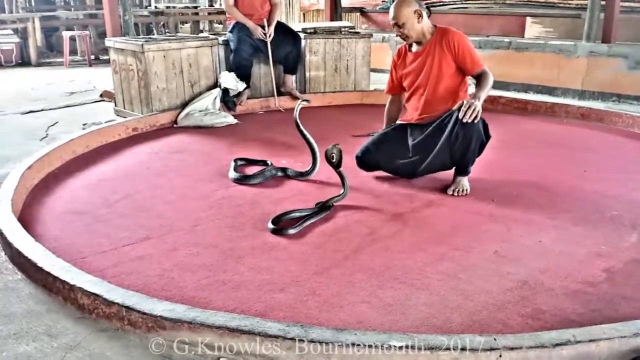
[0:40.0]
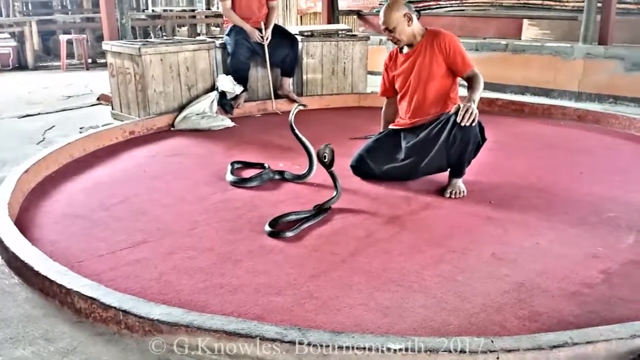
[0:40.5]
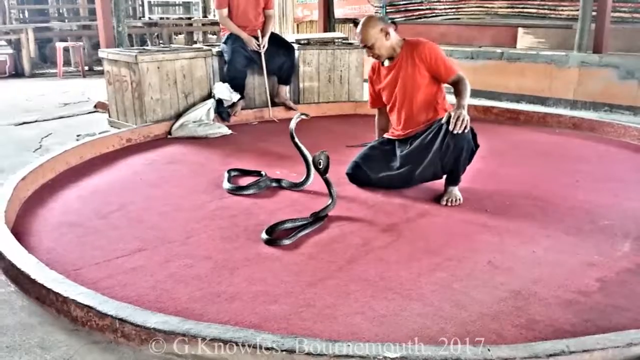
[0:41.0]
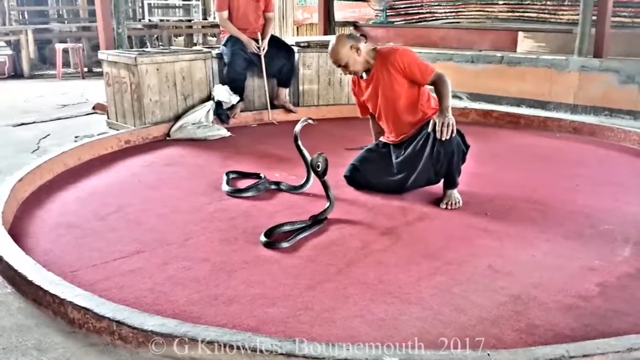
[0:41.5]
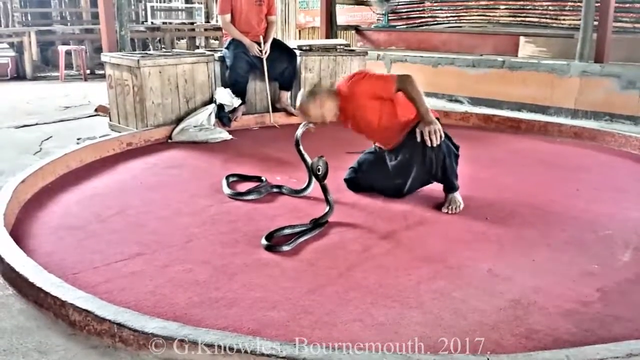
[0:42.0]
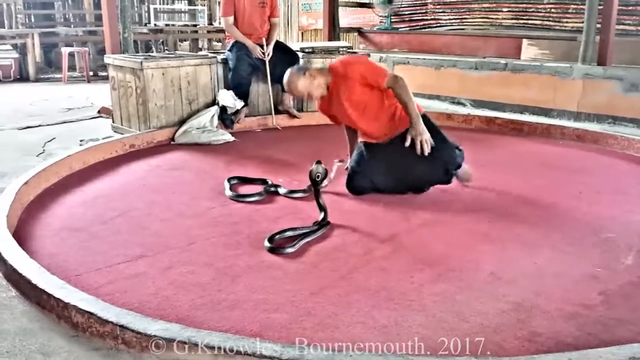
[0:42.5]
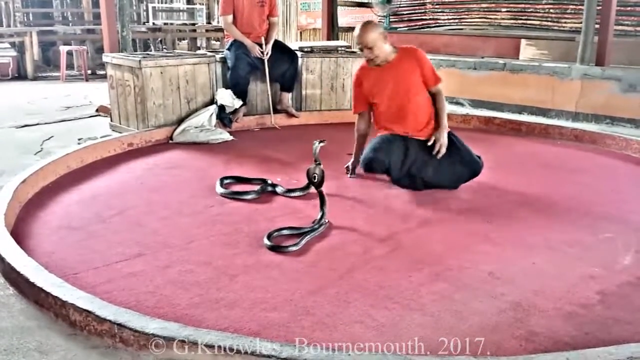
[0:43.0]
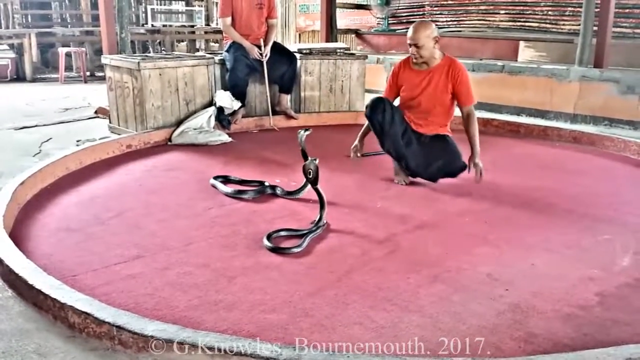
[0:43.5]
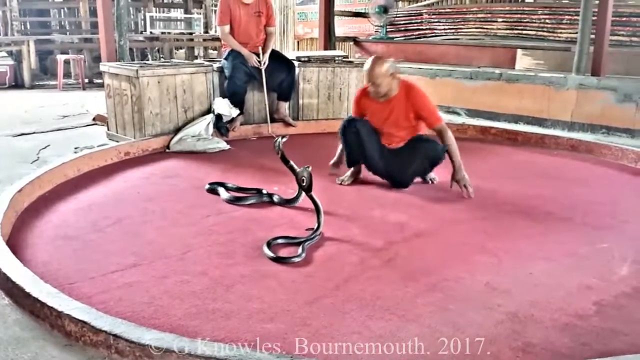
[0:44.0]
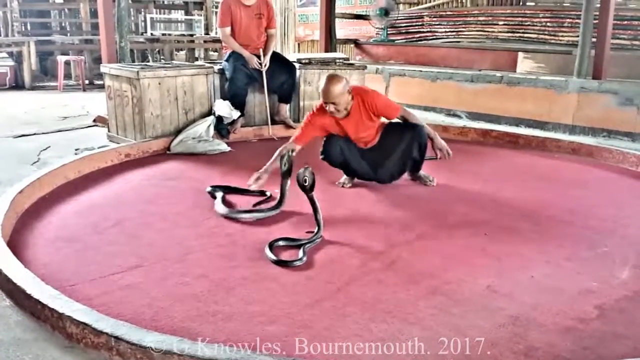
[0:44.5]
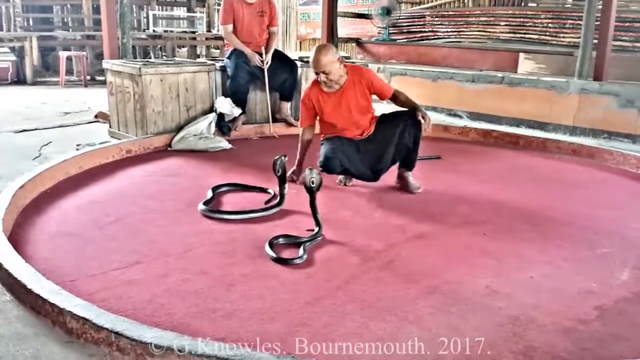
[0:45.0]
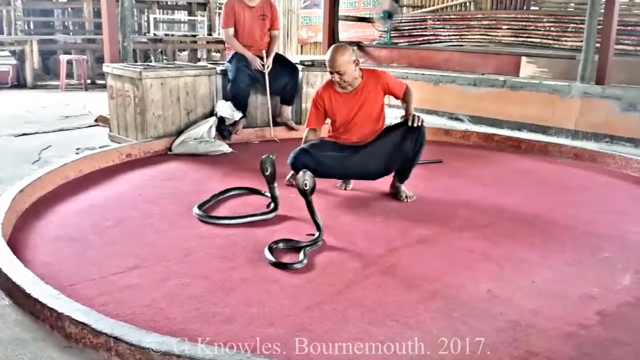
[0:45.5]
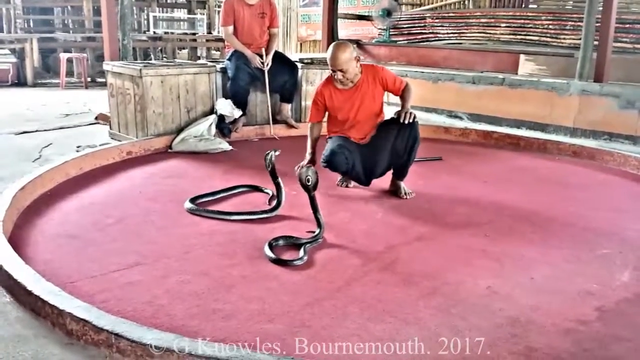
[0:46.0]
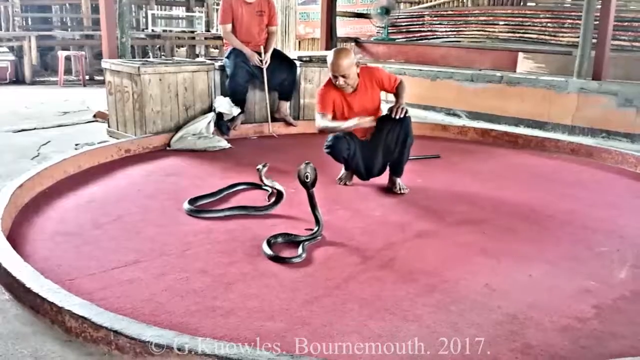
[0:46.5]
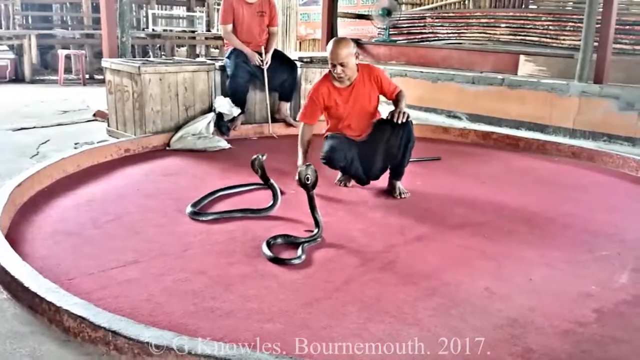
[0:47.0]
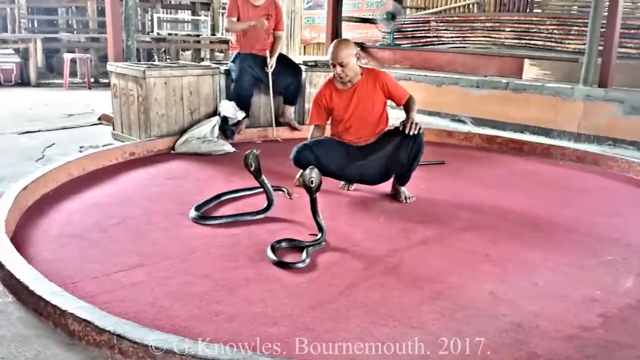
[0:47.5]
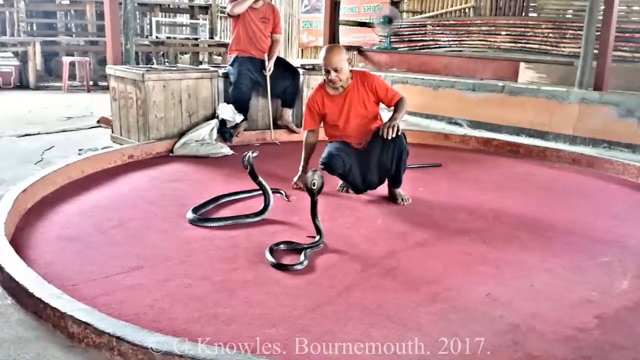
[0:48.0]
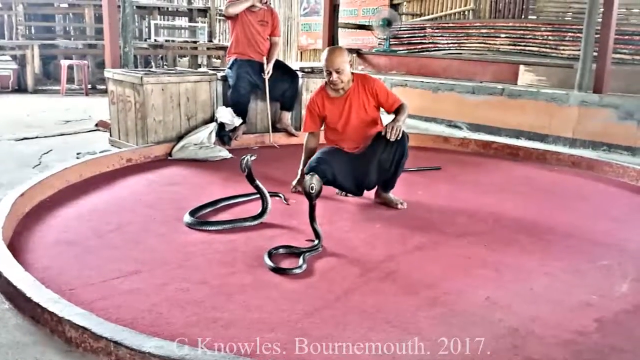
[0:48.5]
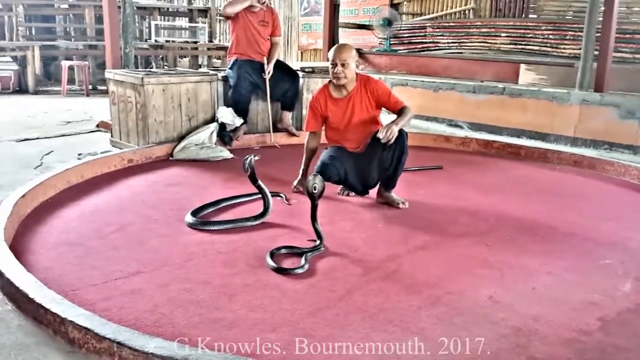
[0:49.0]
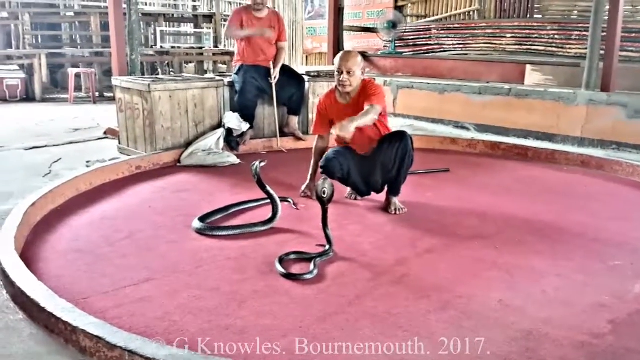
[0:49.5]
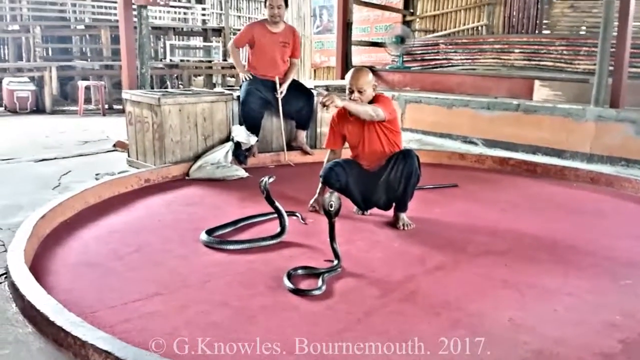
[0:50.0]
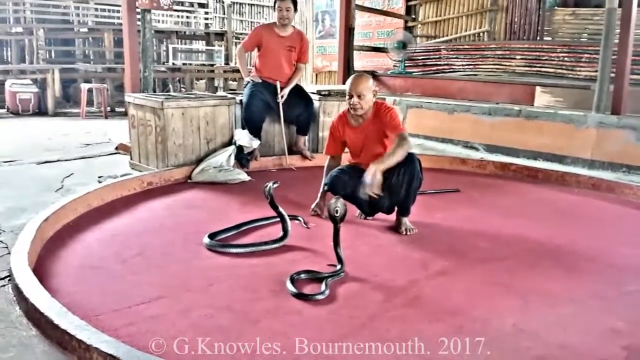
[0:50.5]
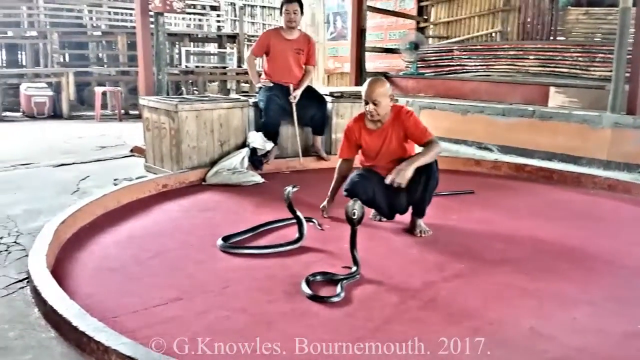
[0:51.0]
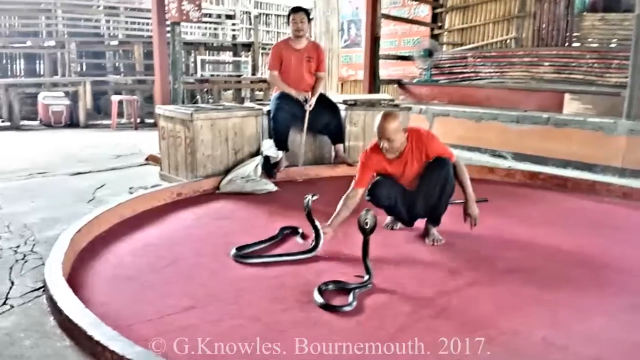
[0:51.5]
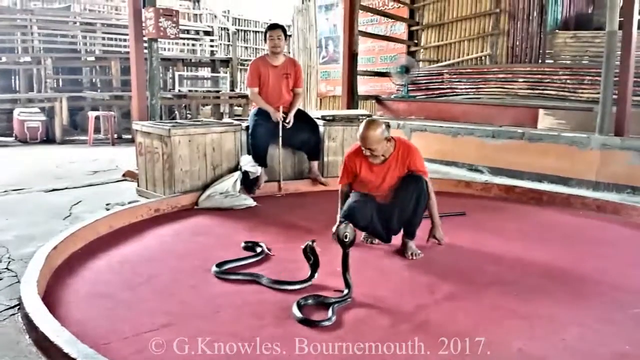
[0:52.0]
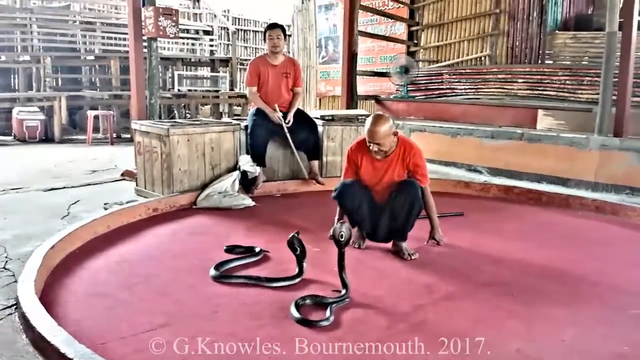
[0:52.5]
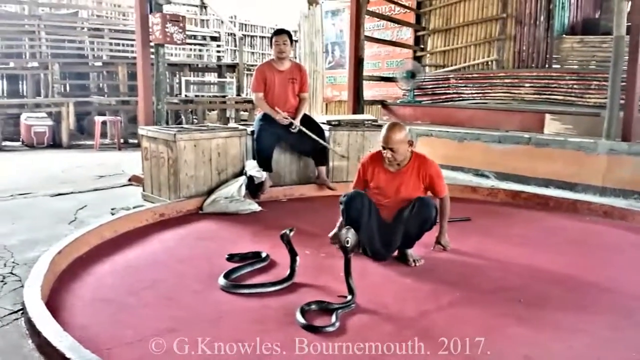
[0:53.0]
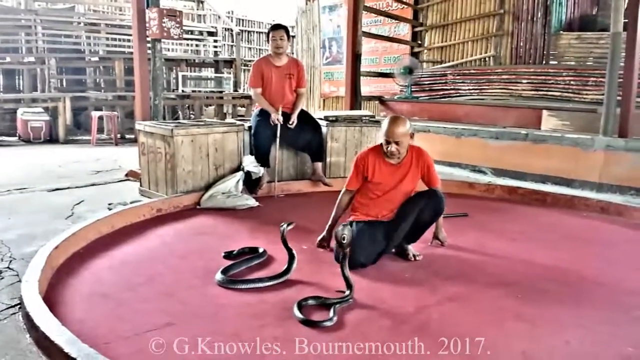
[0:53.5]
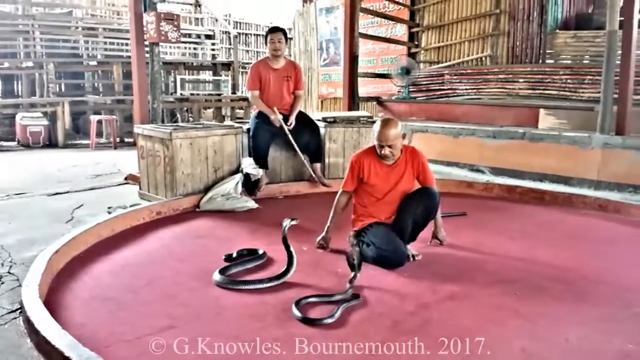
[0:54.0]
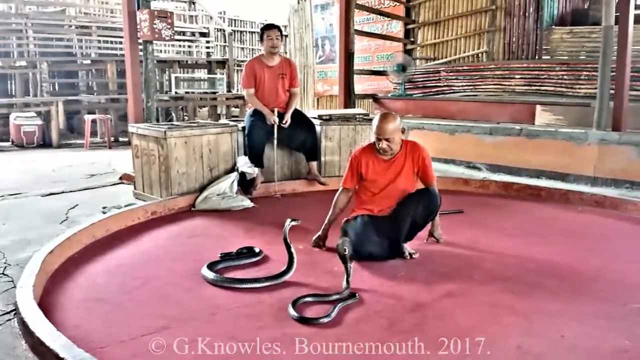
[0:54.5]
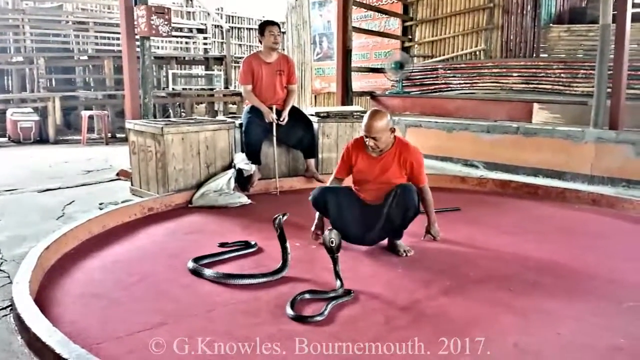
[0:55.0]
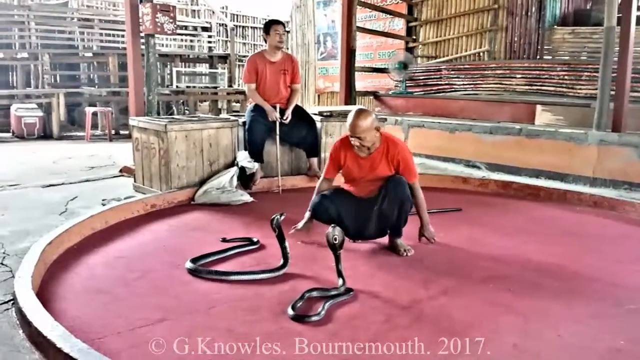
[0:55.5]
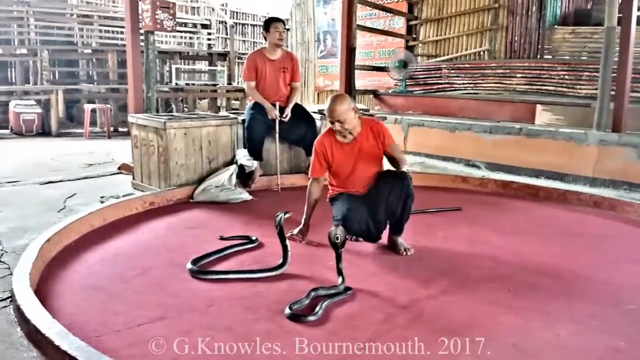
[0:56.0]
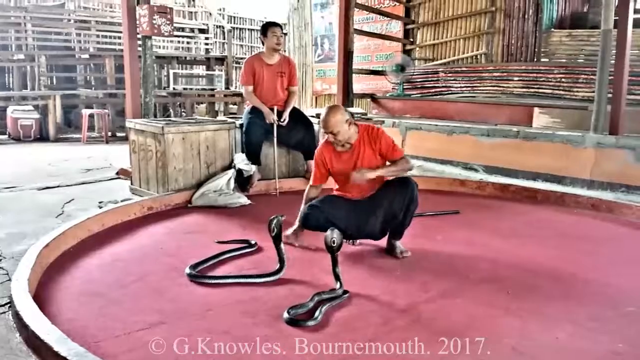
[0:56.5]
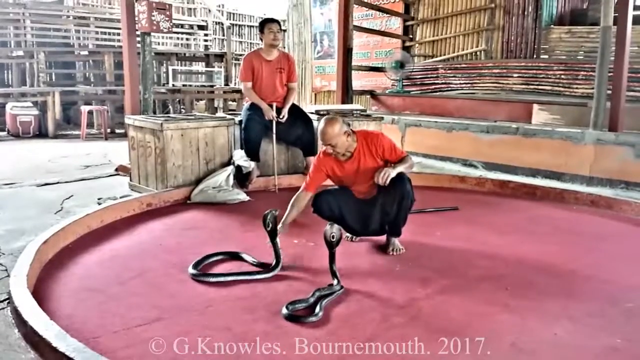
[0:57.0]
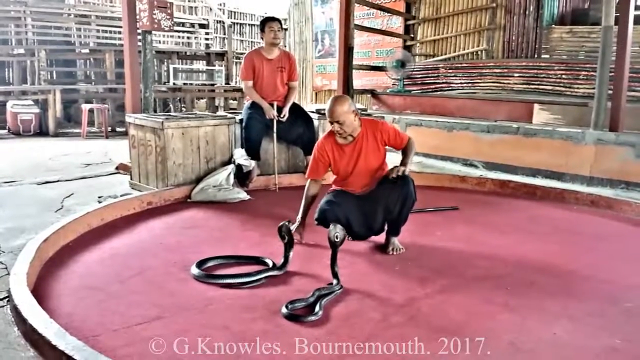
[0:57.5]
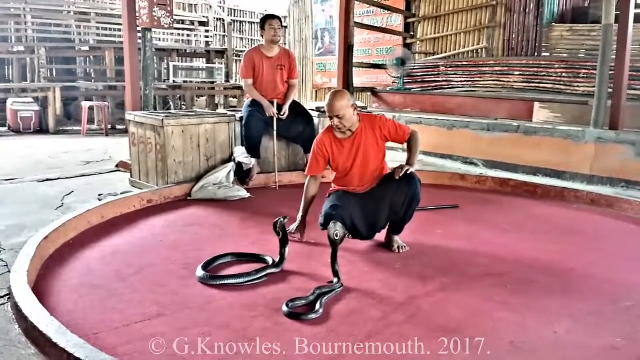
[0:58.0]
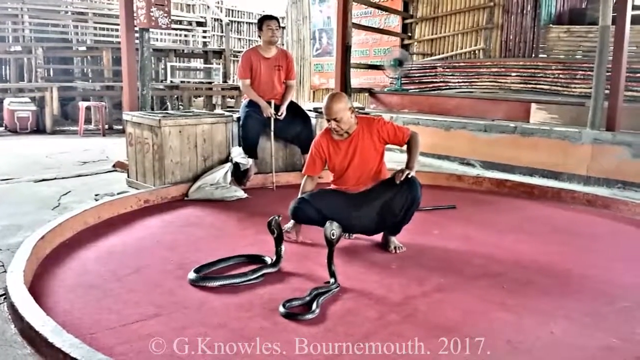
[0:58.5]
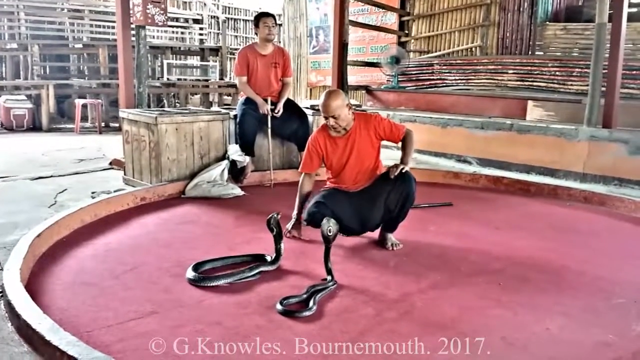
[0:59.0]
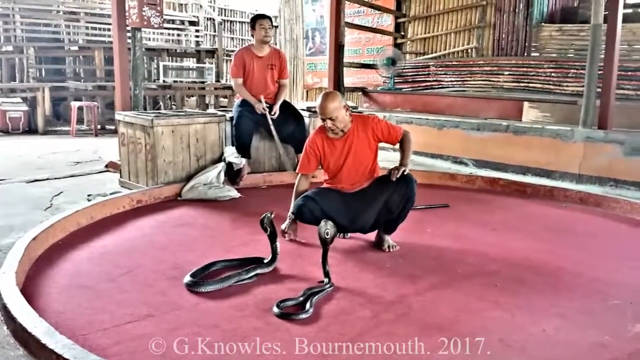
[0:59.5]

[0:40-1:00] The man headbutts the snake on the left and then pushes it multiple times. He points to something off in the background, pushes the snake again, and whips the tail of the left snake. The man in the background is still sitting, holding the hook, with the white garbage bag on the ground next to his left leg. They are still in a circular arena with a pink floor to contain the snakes. Both snakes look agitated and ready to lunge at the man. Both men wear orange-reddish shirts with black pants, and neither is wearing shoes. They appear to be in some sort of area built using raw materials like wood and bamboo. The two men are likely some sort of snake tamers or there to make money off the snakes.